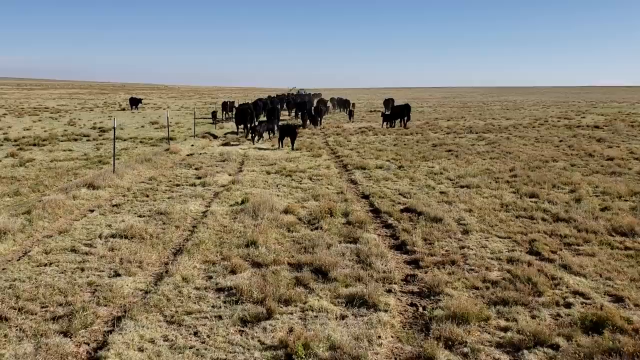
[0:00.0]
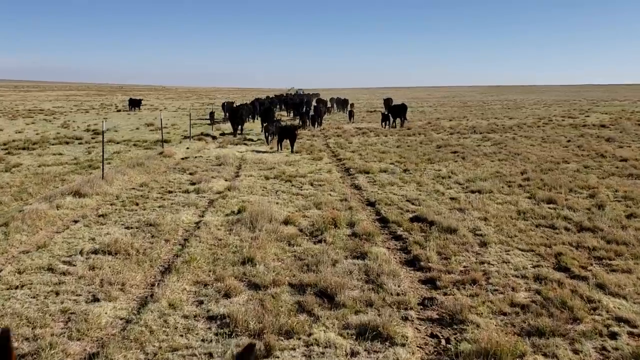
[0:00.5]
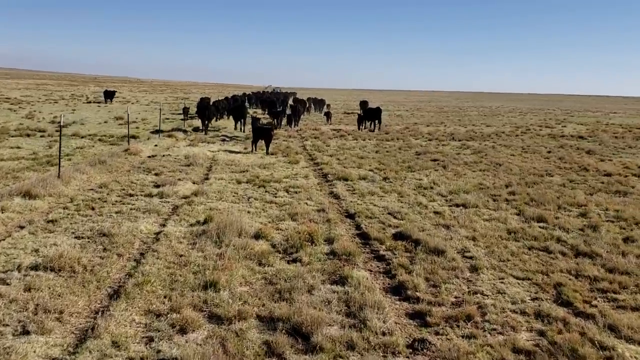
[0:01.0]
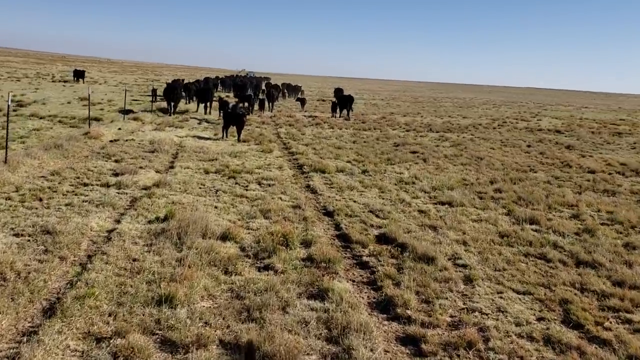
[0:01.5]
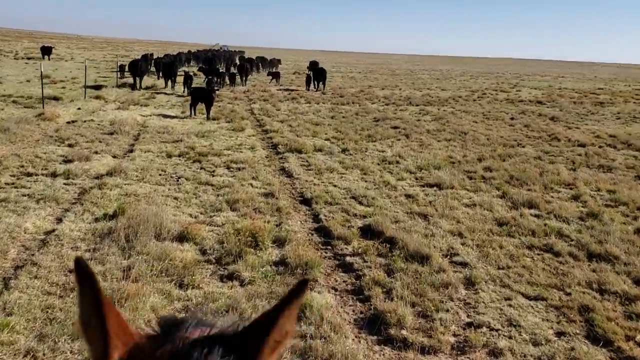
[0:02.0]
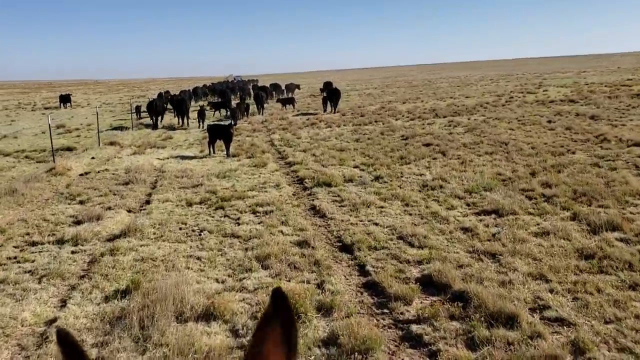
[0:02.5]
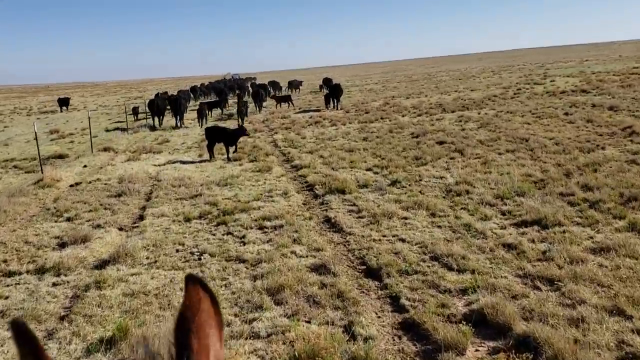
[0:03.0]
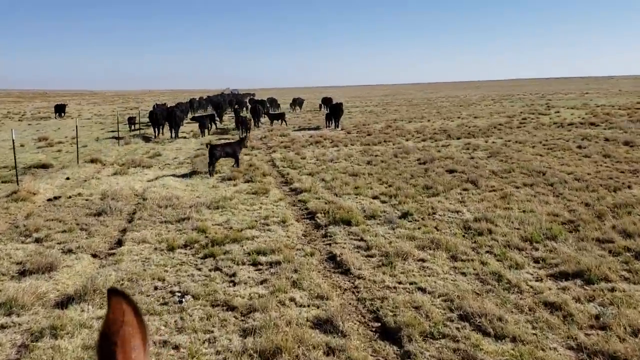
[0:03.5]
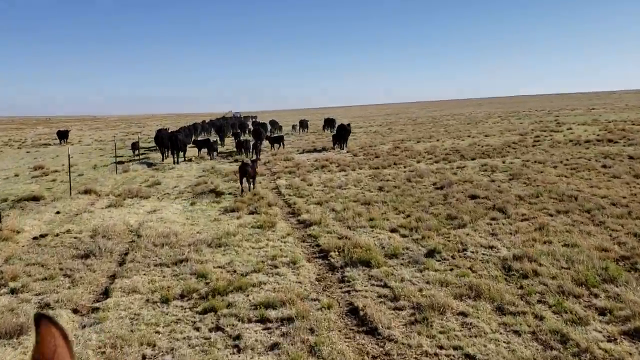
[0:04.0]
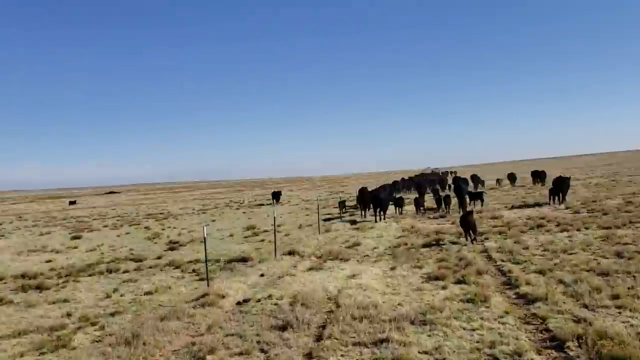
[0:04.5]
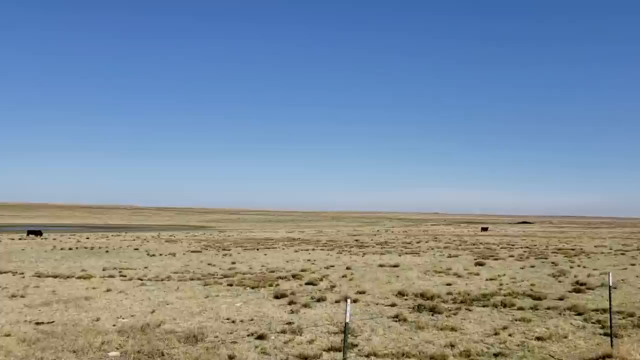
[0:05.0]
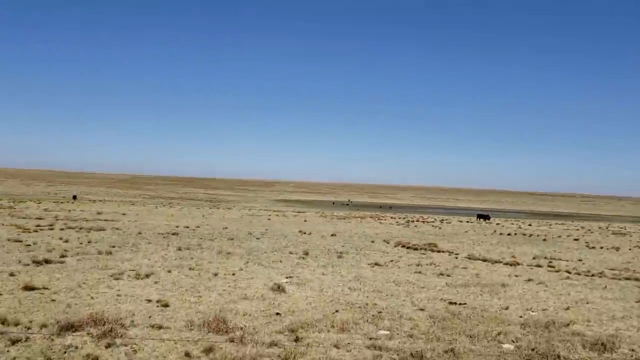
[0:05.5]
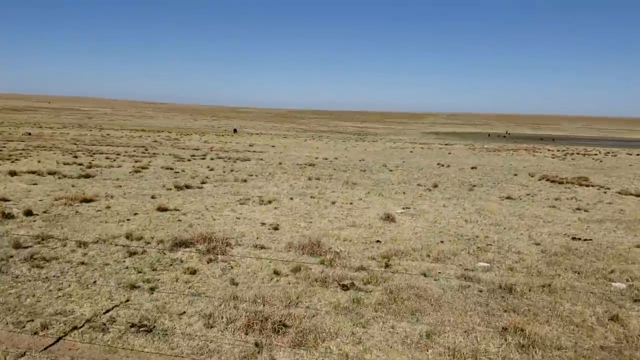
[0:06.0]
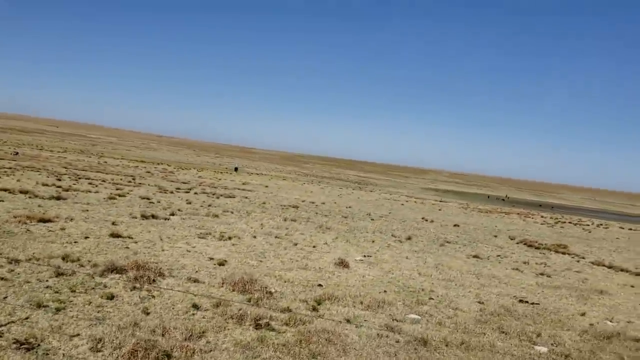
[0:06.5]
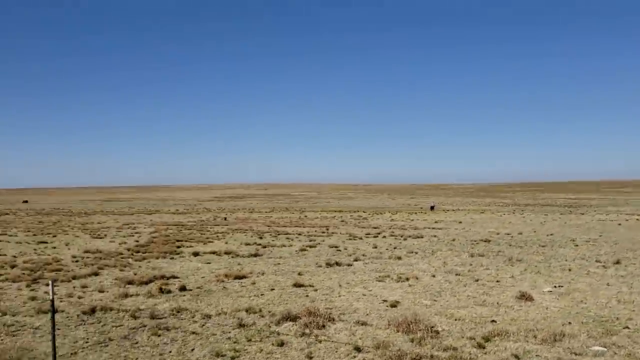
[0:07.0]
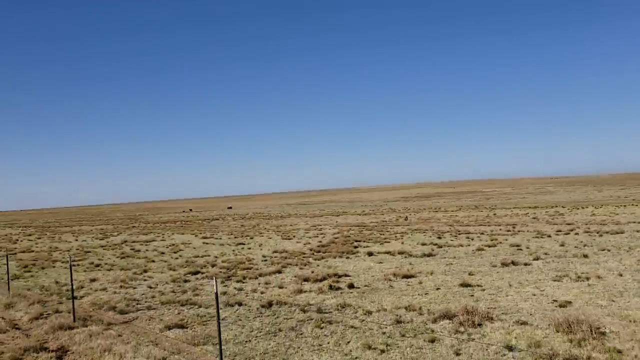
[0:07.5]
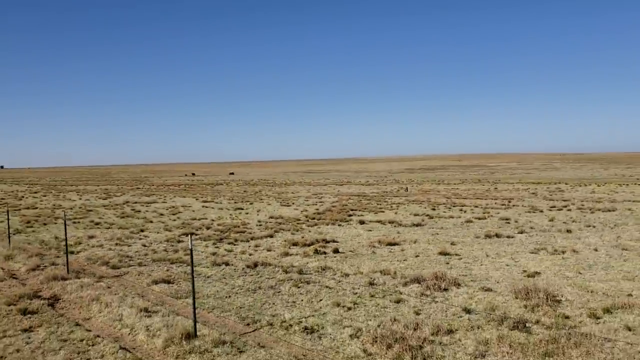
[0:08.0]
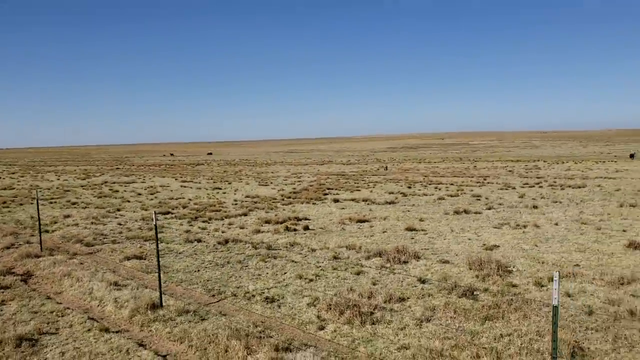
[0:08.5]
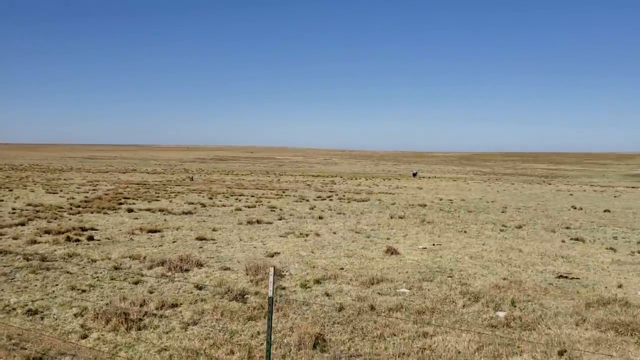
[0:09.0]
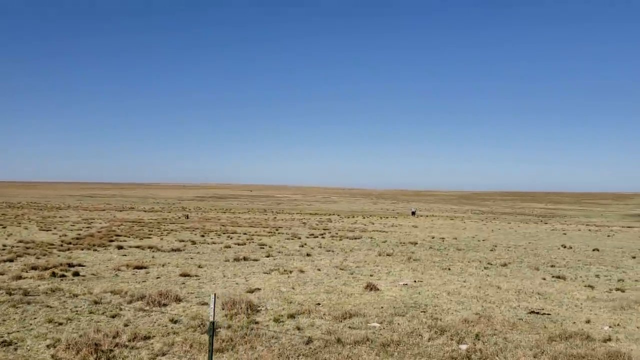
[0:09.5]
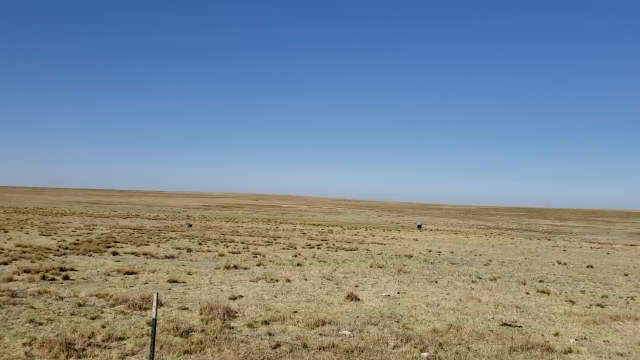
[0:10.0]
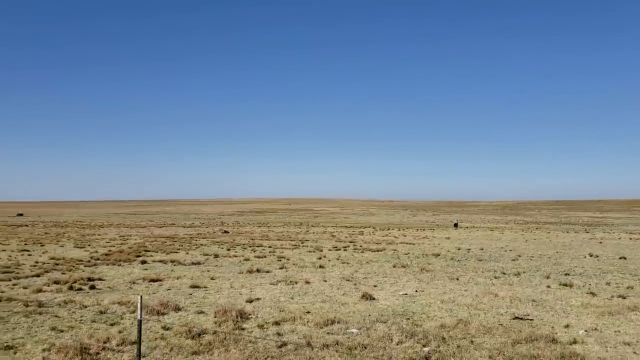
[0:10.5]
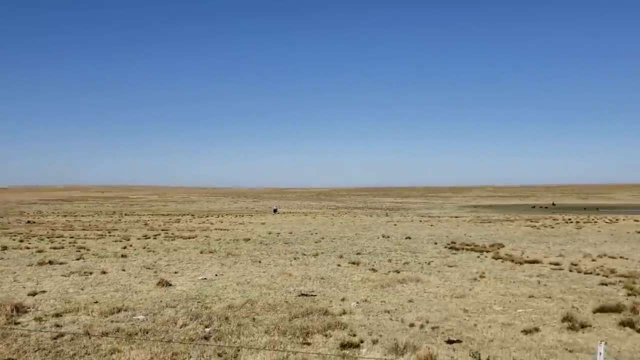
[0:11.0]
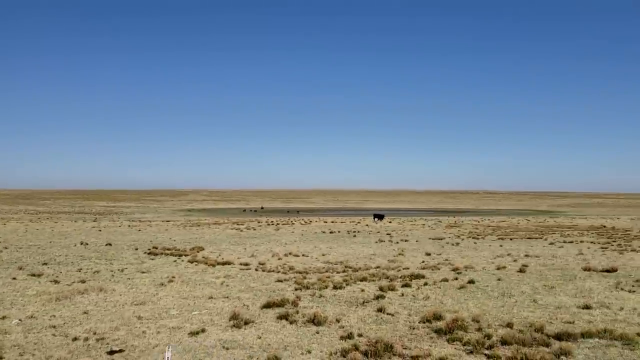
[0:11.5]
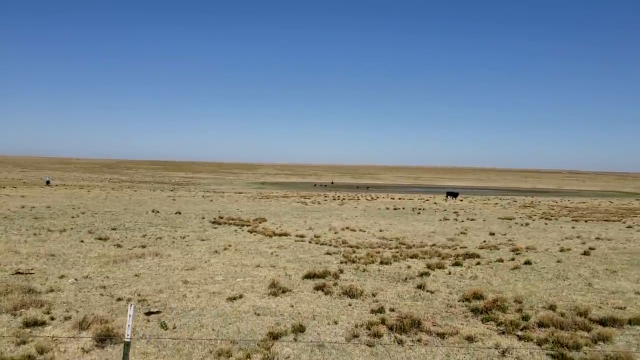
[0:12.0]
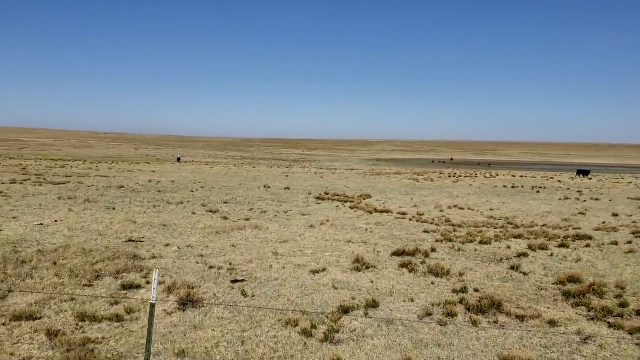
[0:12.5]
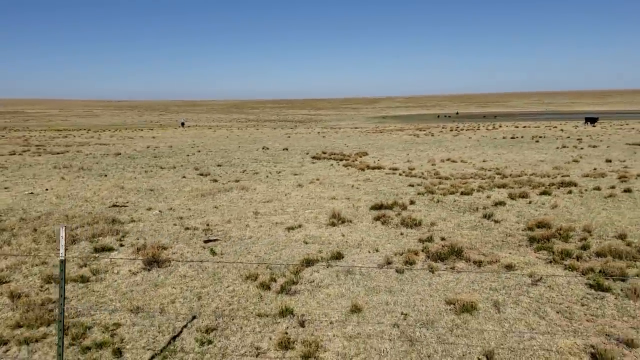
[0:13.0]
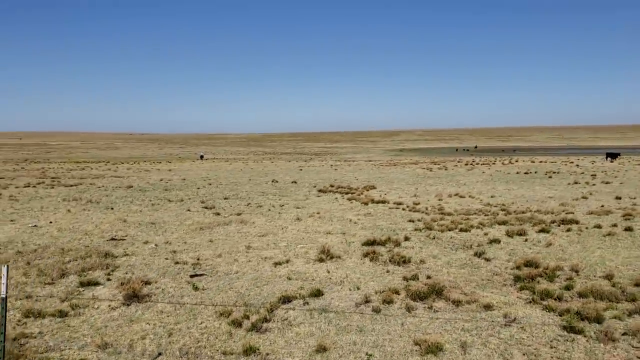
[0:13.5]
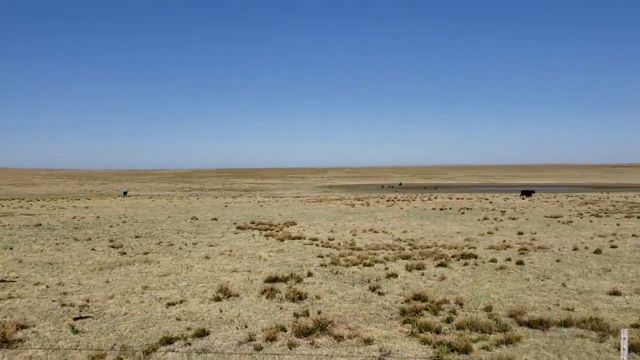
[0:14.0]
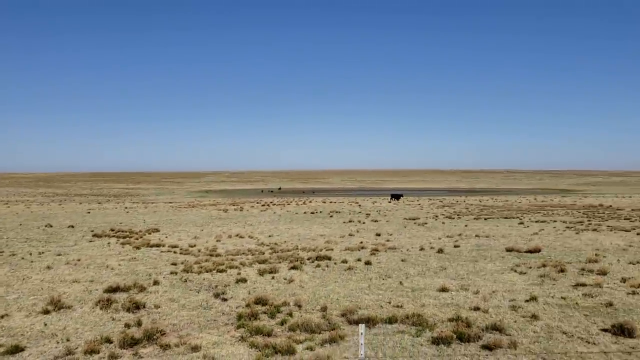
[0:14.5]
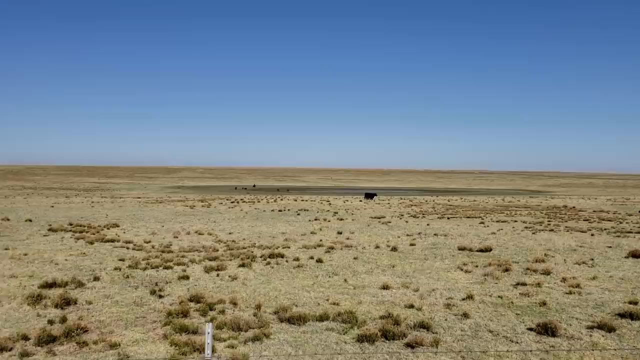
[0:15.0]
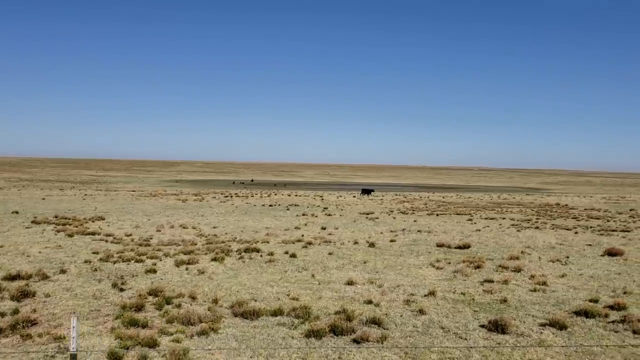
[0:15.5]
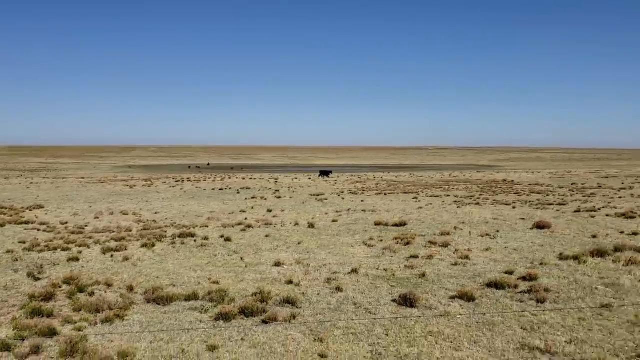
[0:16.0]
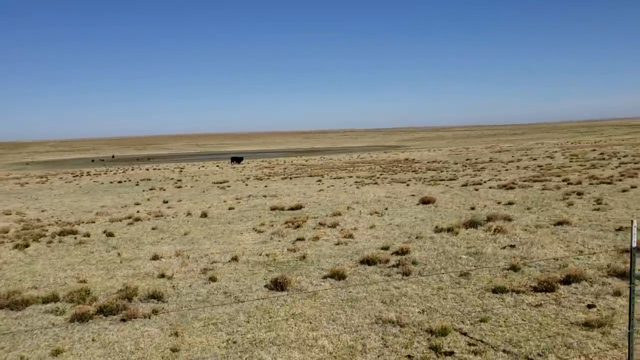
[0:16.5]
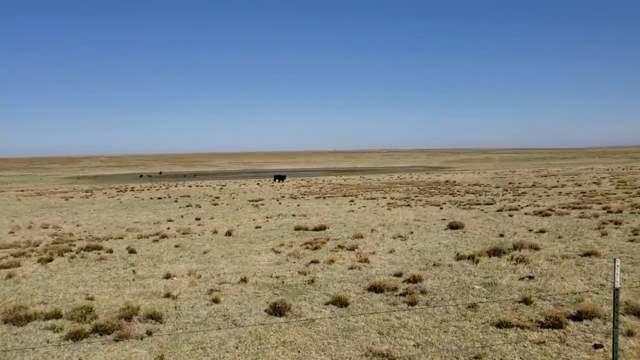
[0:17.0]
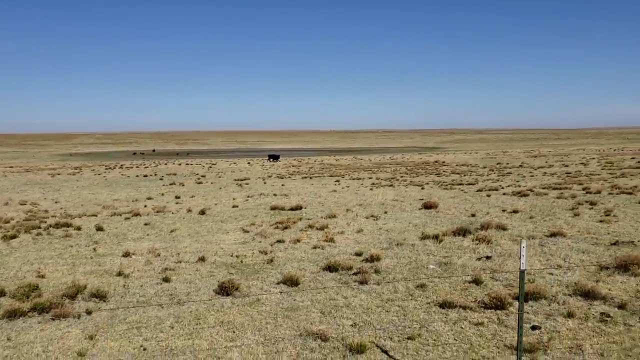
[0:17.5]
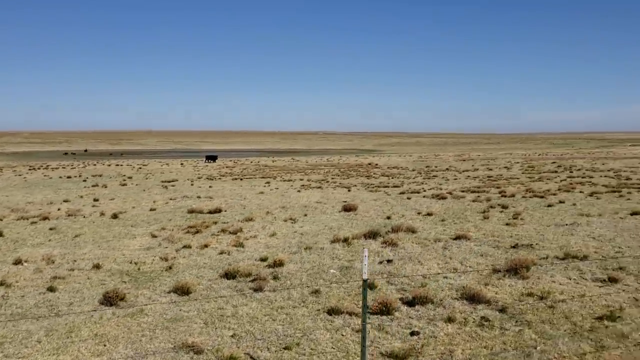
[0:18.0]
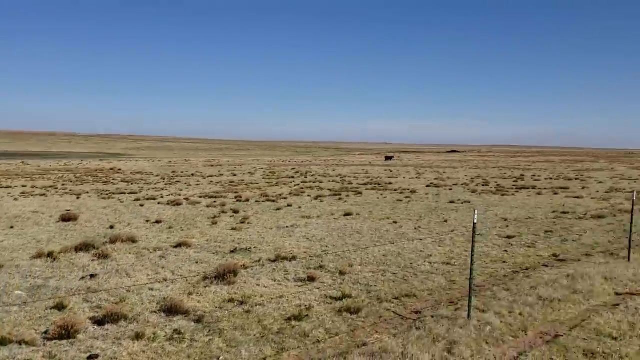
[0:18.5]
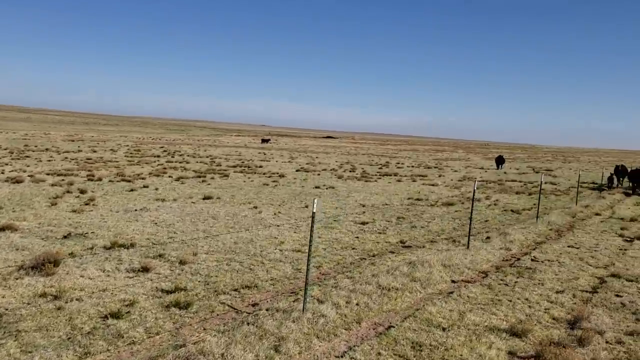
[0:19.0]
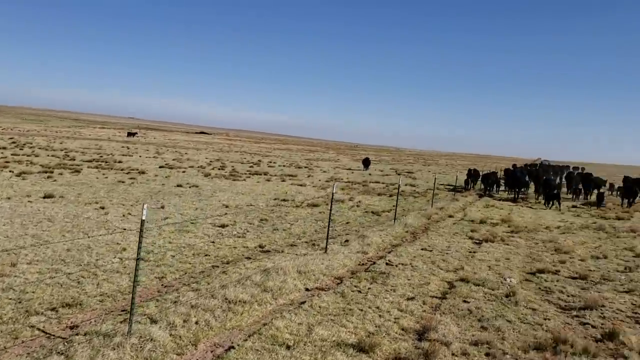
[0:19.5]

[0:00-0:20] During the daytime, a large group of cattle is in a field. Ahead of the viewer, the herd numbers maybe 50, made up mostly of adults and baby cattle, and they are mostly huddled in one place. A few stragglers have strayed from the herd and are quite far from the other cattle; two of them are quite far apart, and one walks alone as the camera follows it. The footage is taken by a person on horseback, and the horse's ears are visible at the bottom of the frame in the foreground, as if from a body cam worn by the rider or rancher.